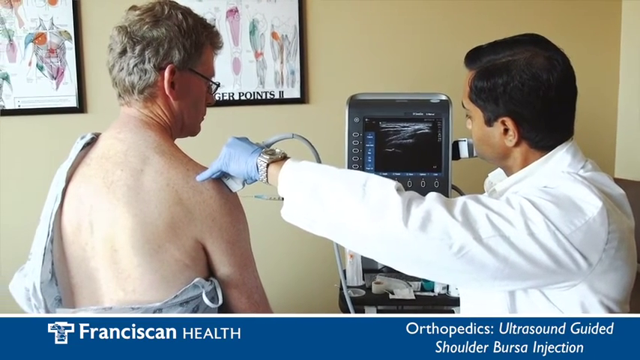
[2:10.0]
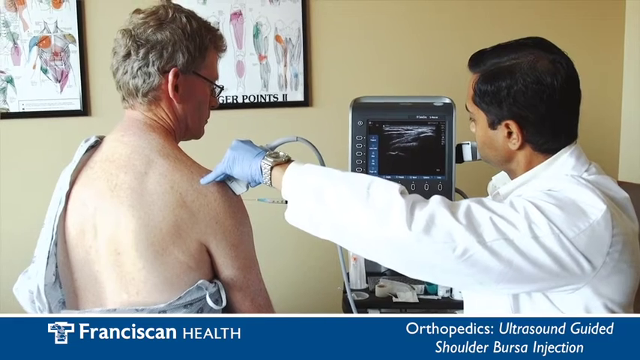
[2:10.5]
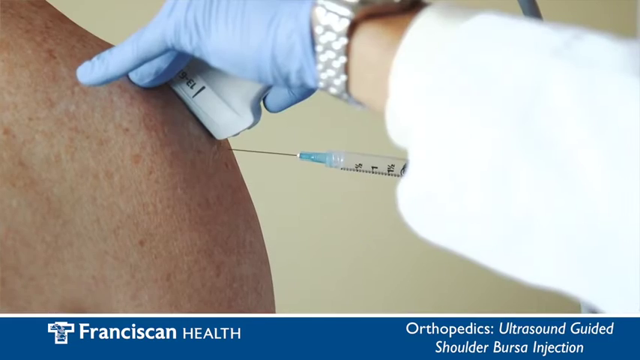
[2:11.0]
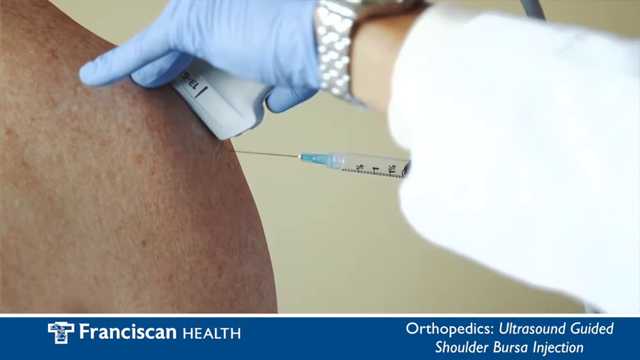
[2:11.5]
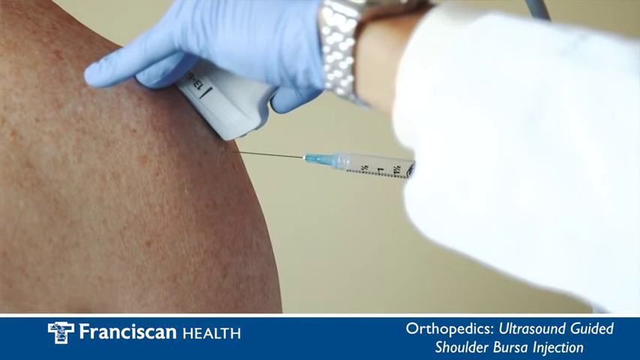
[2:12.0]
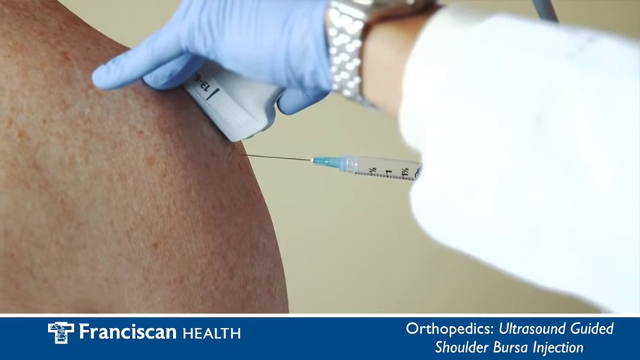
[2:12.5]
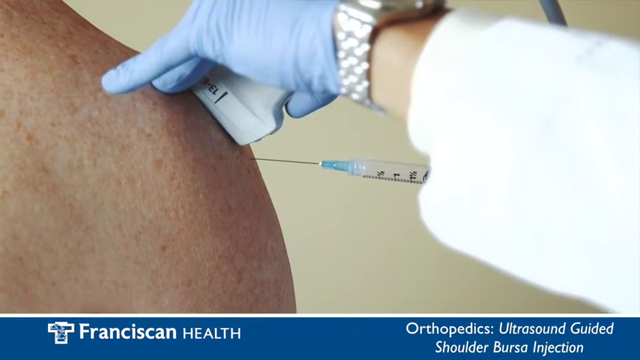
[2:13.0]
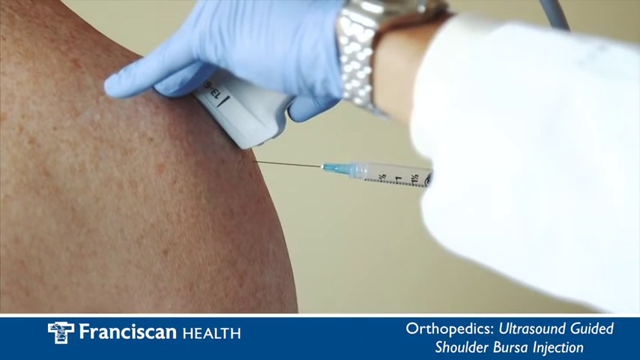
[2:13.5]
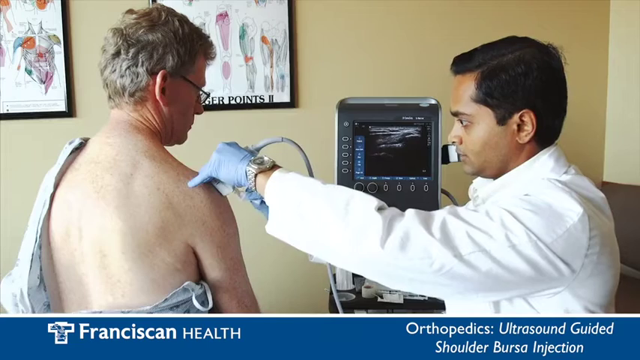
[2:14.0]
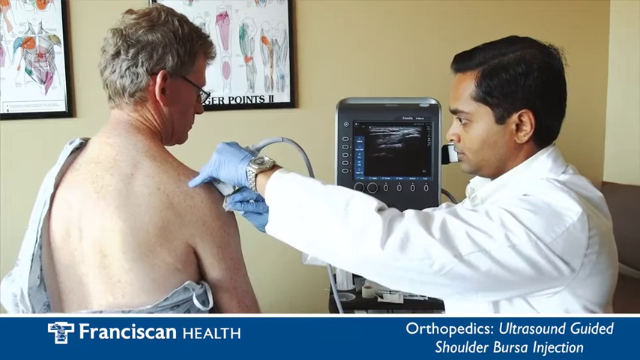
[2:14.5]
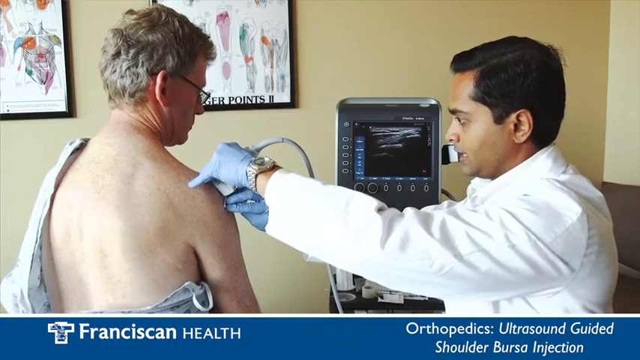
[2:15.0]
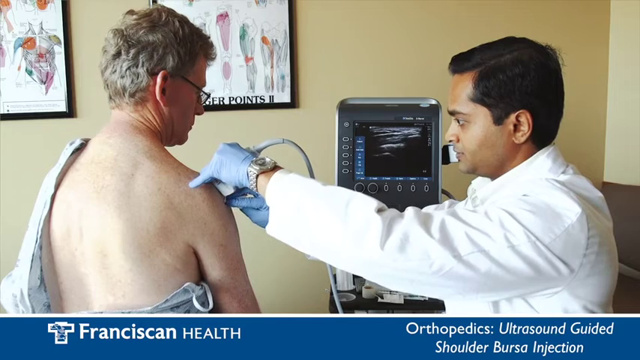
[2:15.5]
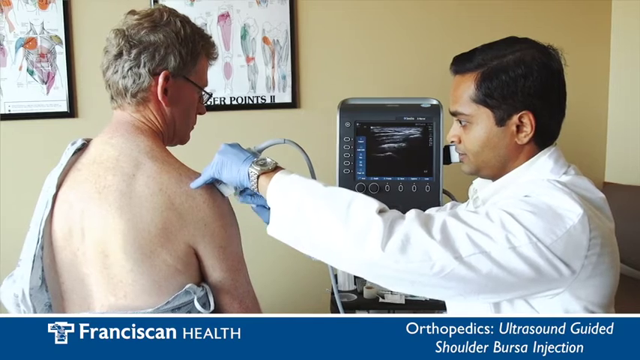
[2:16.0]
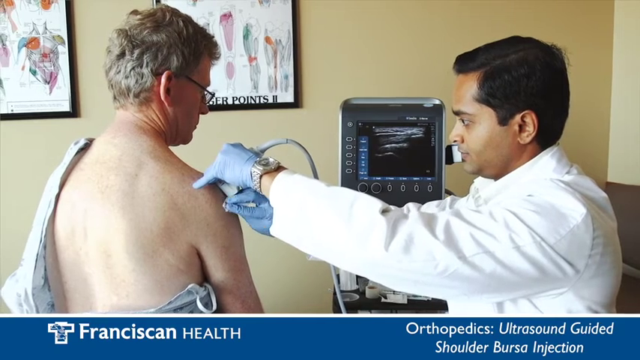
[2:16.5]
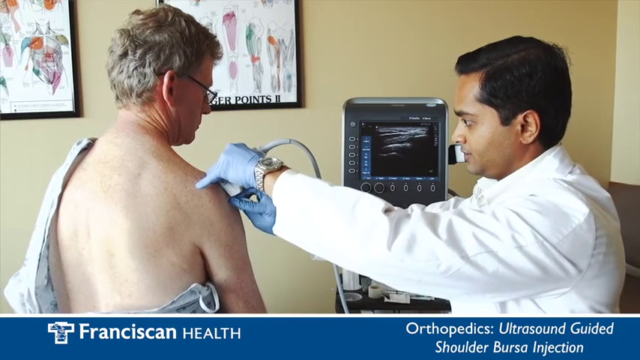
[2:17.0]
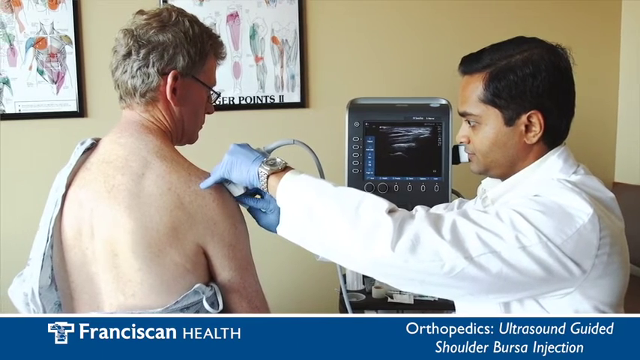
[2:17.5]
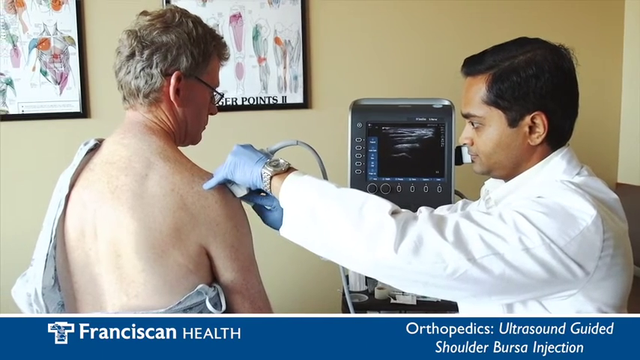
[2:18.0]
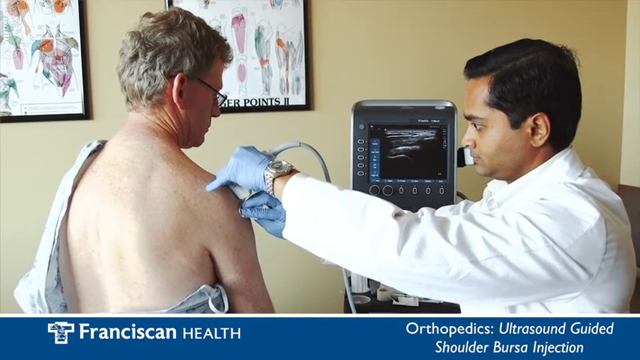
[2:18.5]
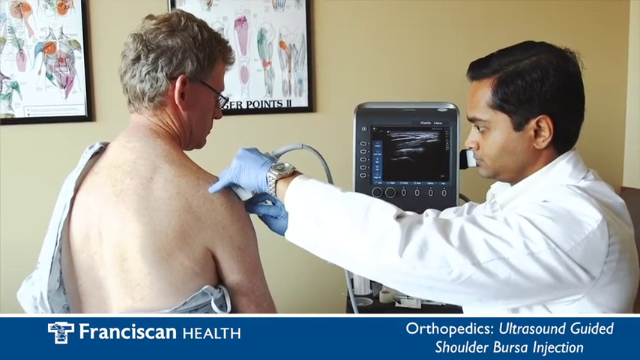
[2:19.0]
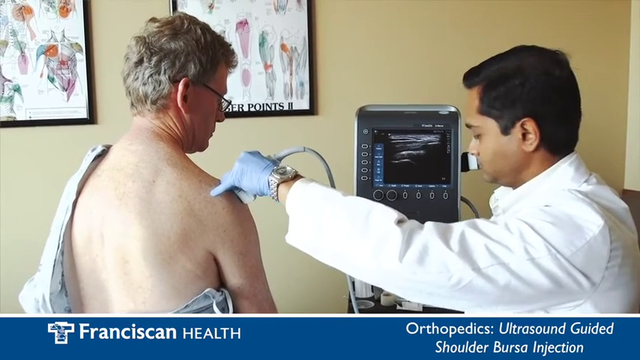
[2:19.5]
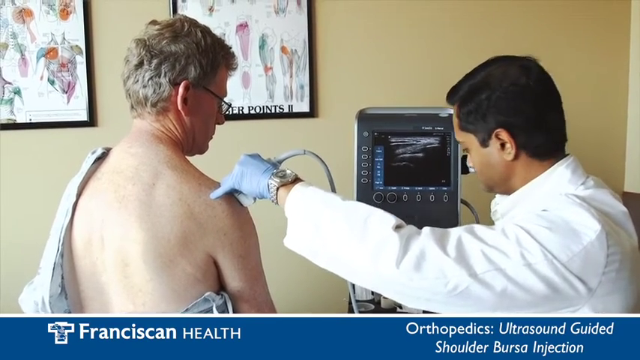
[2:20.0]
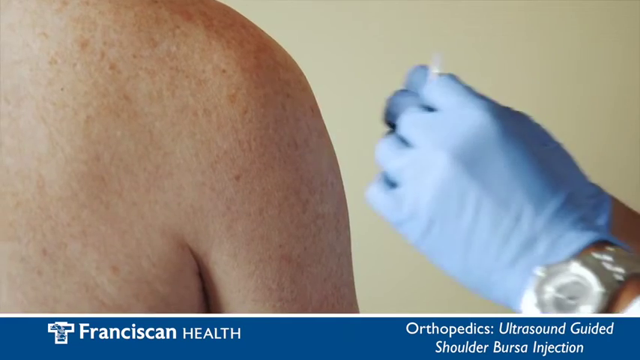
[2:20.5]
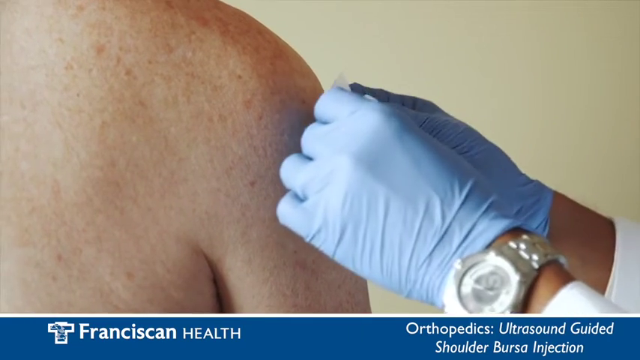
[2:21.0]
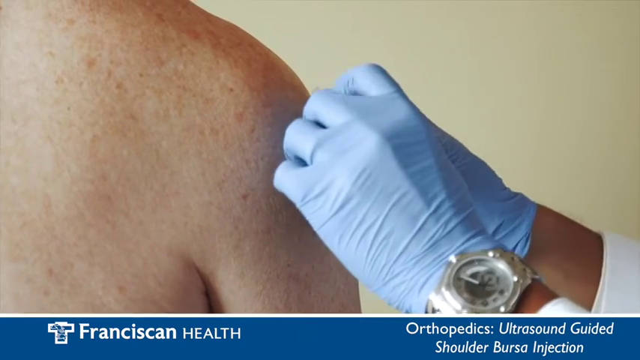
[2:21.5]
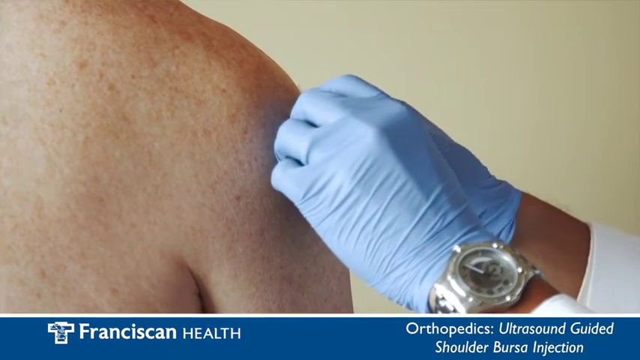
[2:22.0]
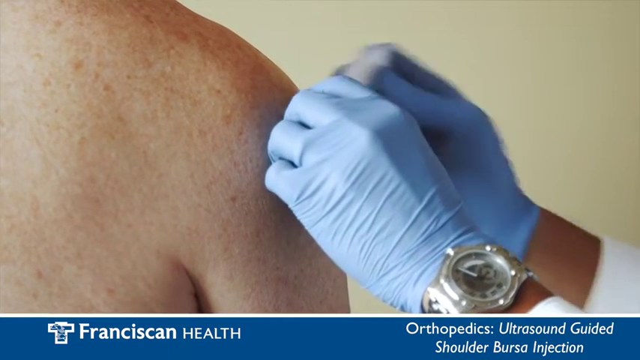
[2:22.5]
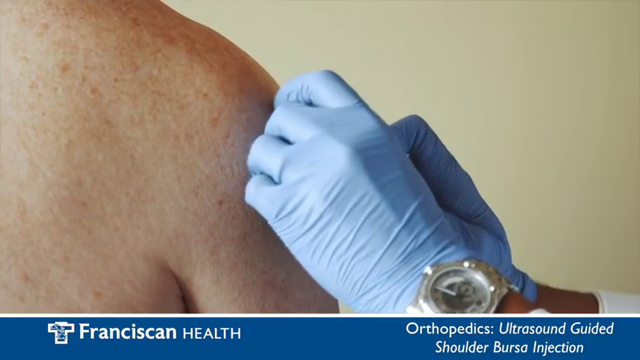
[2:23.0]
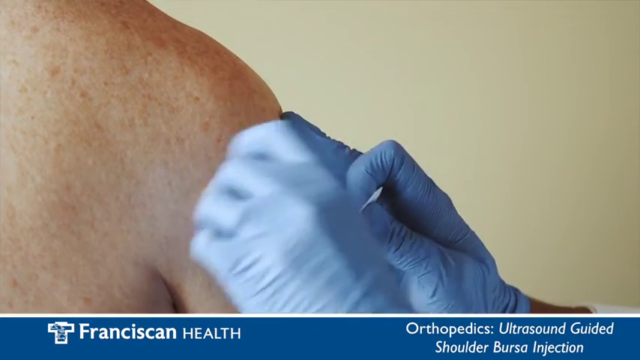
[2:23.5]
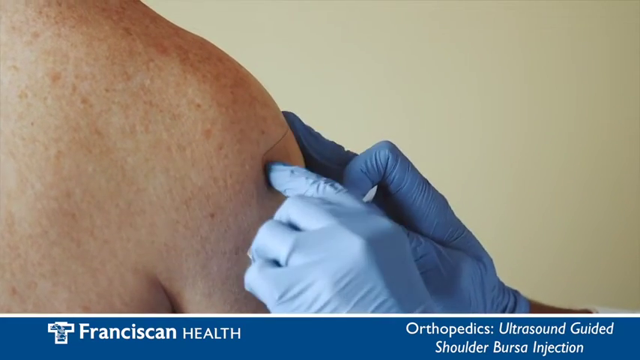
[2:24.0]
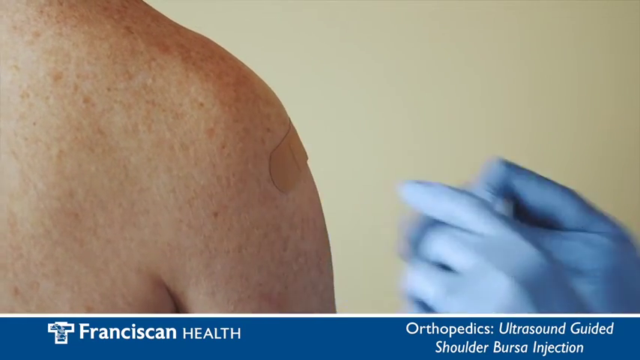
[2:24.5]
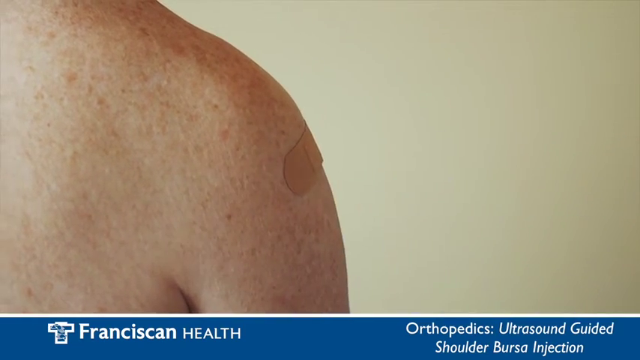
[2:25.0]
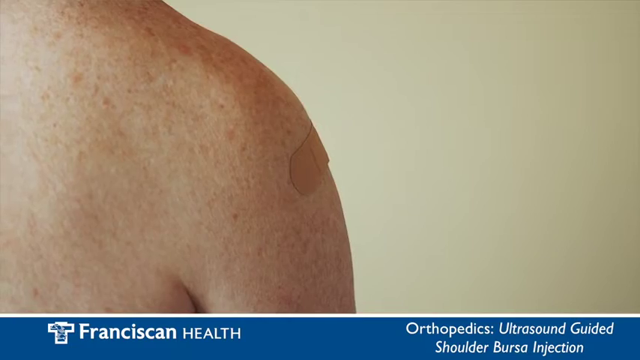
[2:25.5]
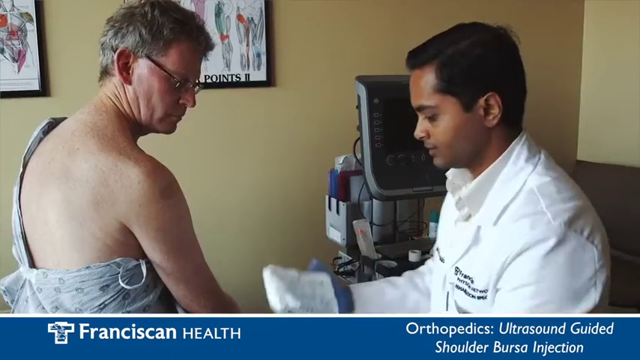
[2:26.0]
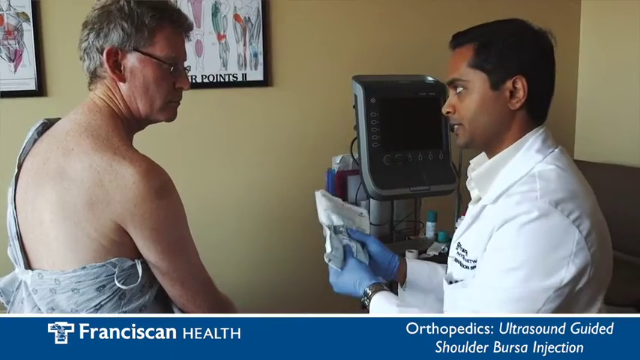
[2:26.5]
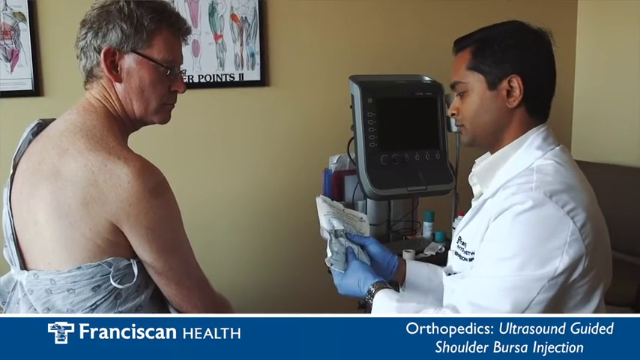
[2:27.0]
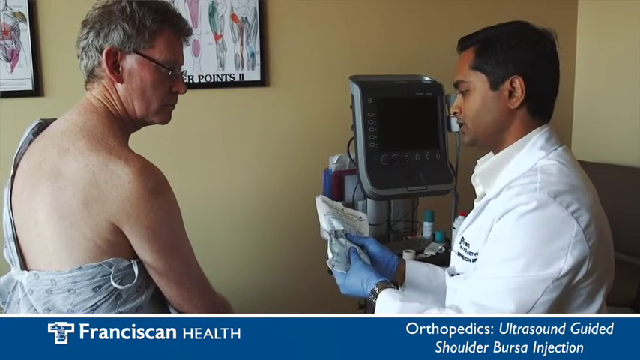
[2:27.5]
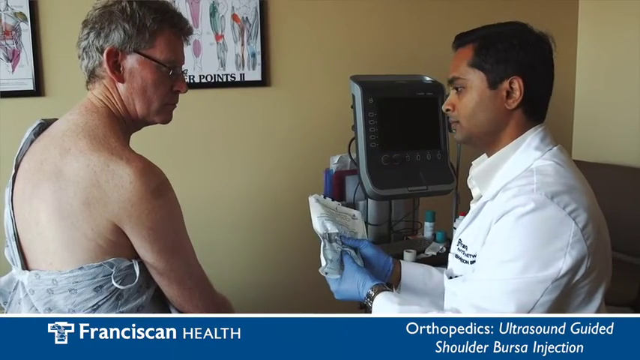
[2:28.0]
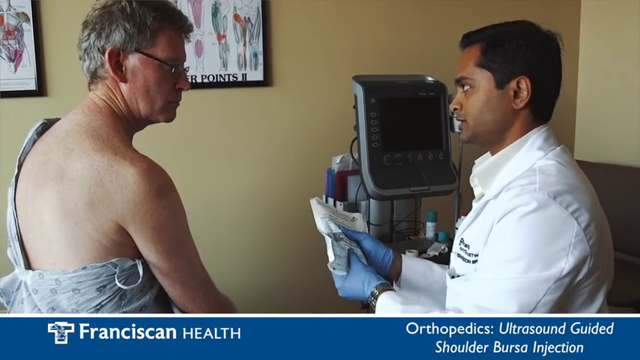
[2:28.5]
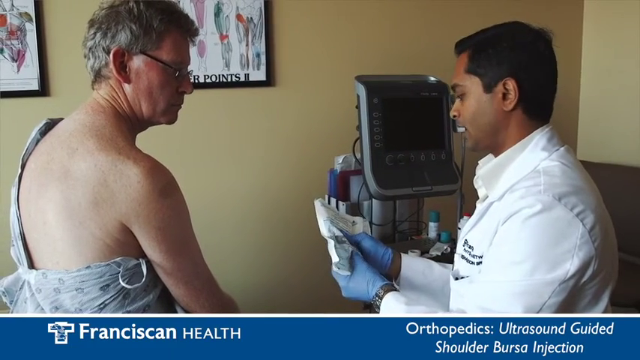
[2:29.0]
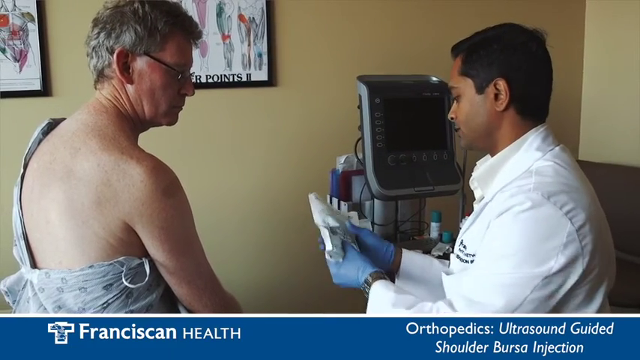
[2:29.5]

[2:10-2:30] The doctor and patient look at the screen, which shows what the ultrasound scanner is hovering over: the patient's right shoulder. The patient's gown covers him fully except for the upper right part of his back and his shoulder. In the background are anatomy posters: the one on the left shows the torso and highlights parts such as the pectorals and shoulders, and the one on the right shows trigger points, primarily displaying the arm and its muscles. The camera pans from the doctor and patient looking at the screen to the needle, filled with translucent liquid, hovering over the patient's right shoulder, then to the doctor wiping the injection site on the right shoulder with a white square cloth. The doctor puts a beige bandaid on the injection site, then pulls out a white pack and squeezes it while talking to the patient.